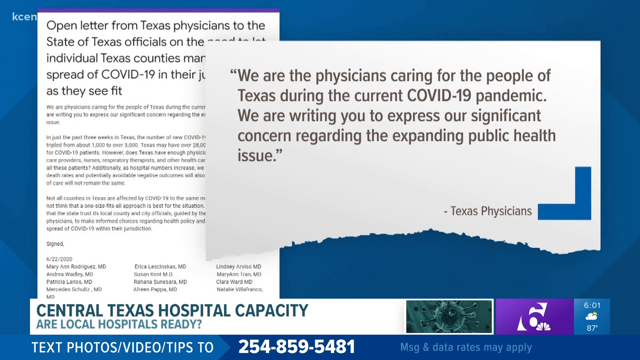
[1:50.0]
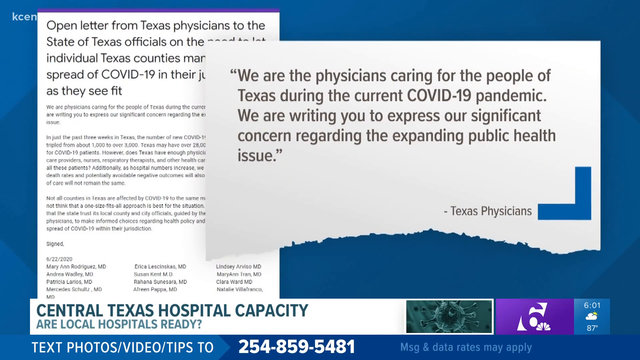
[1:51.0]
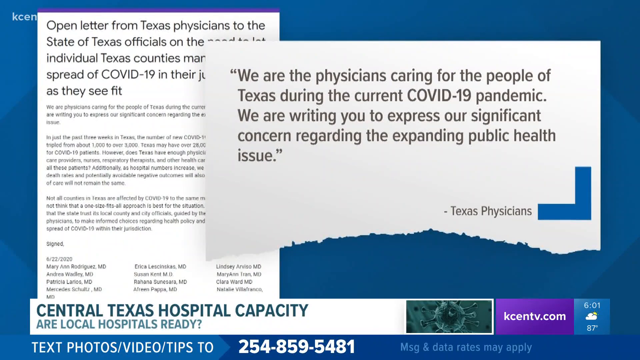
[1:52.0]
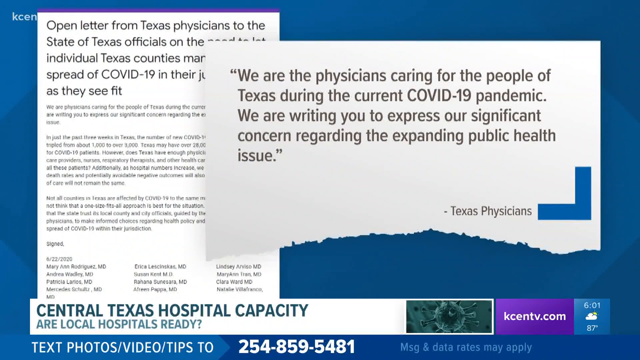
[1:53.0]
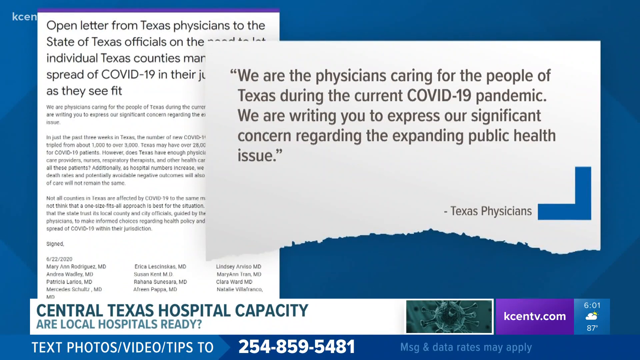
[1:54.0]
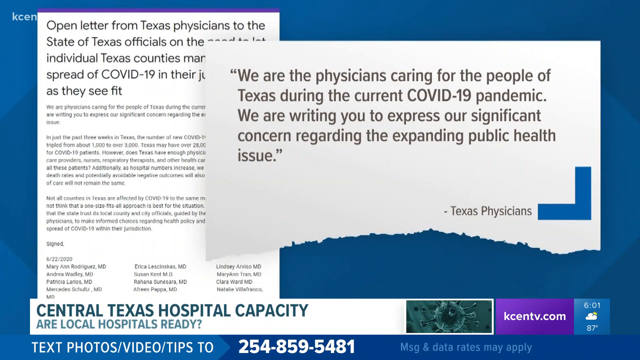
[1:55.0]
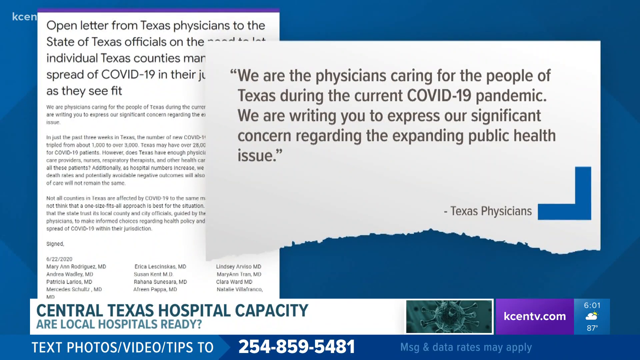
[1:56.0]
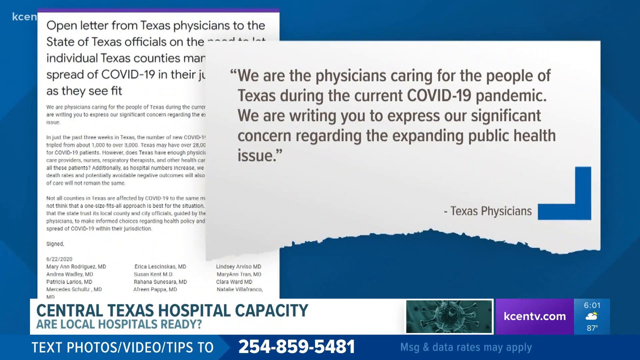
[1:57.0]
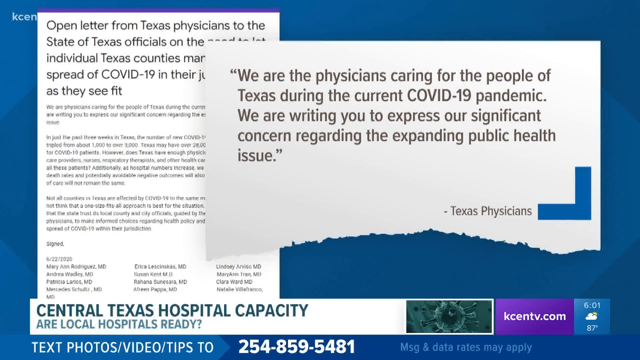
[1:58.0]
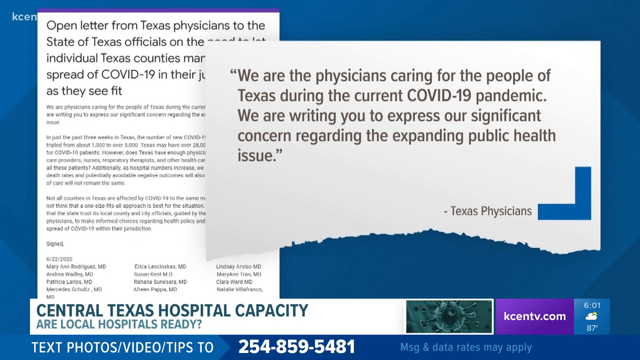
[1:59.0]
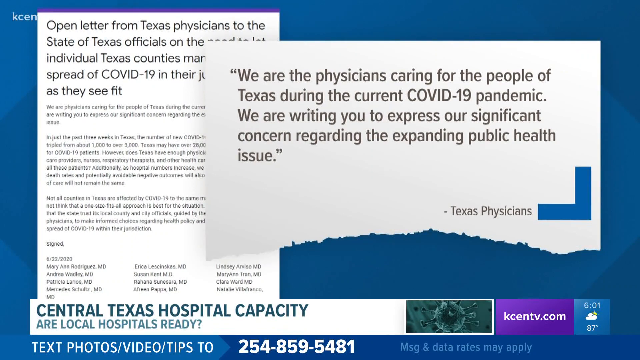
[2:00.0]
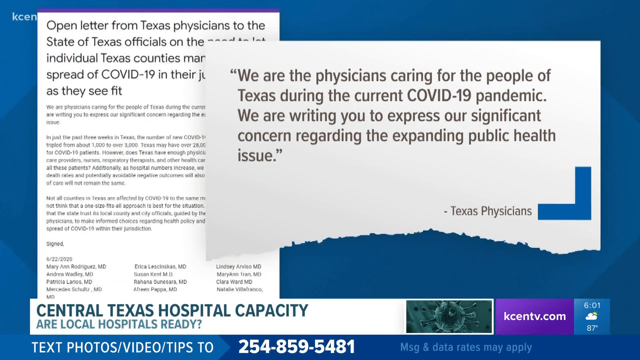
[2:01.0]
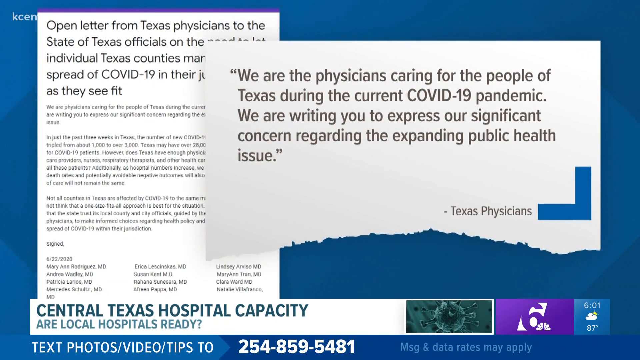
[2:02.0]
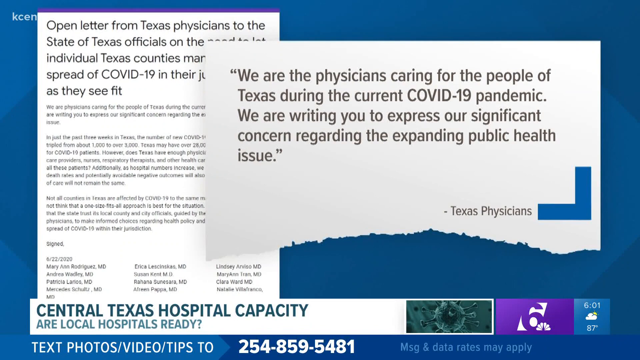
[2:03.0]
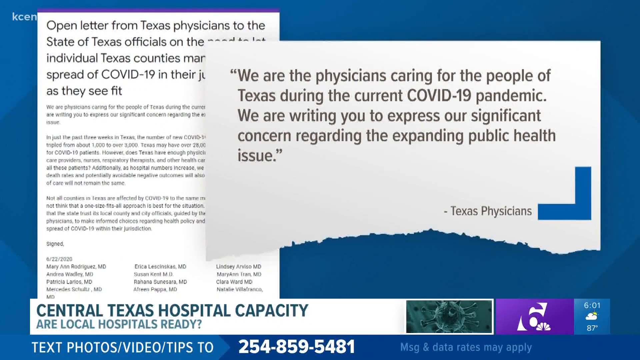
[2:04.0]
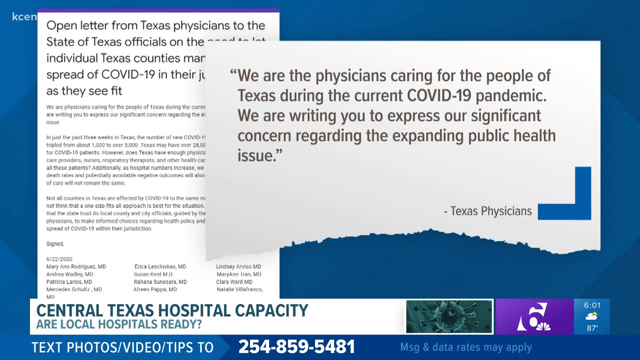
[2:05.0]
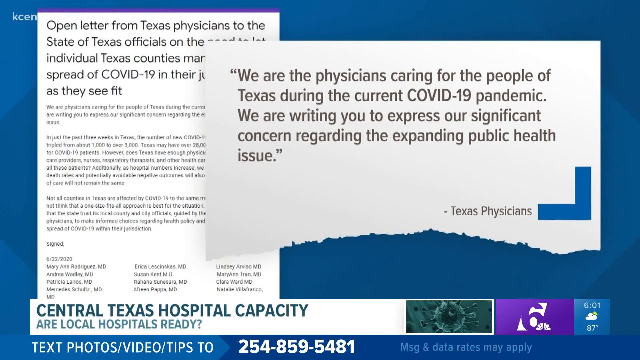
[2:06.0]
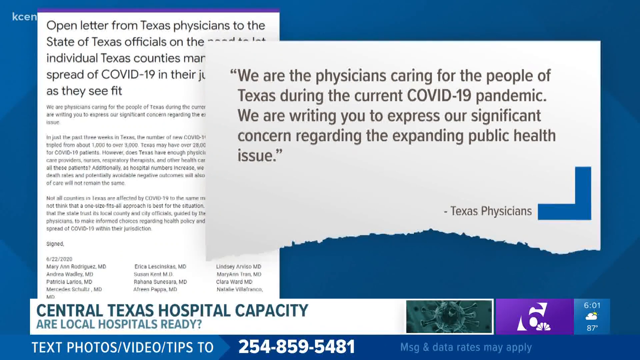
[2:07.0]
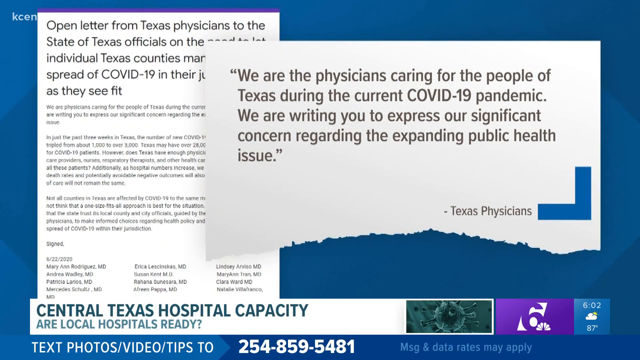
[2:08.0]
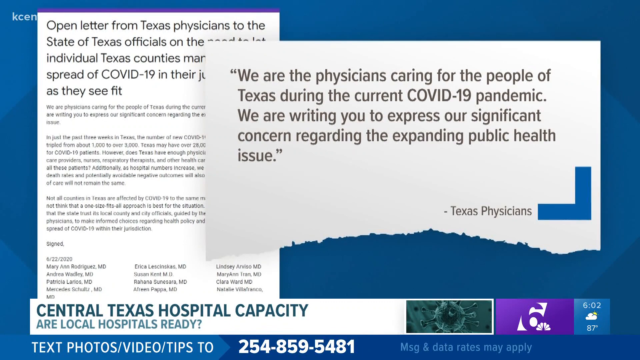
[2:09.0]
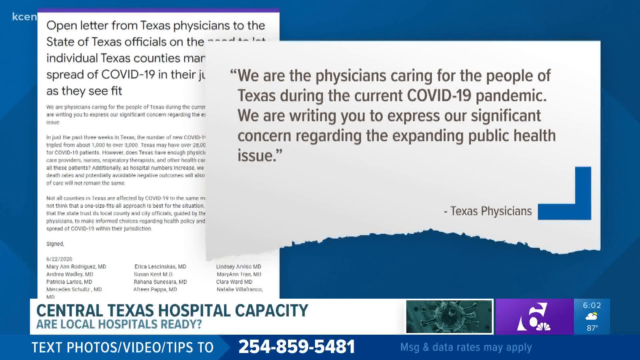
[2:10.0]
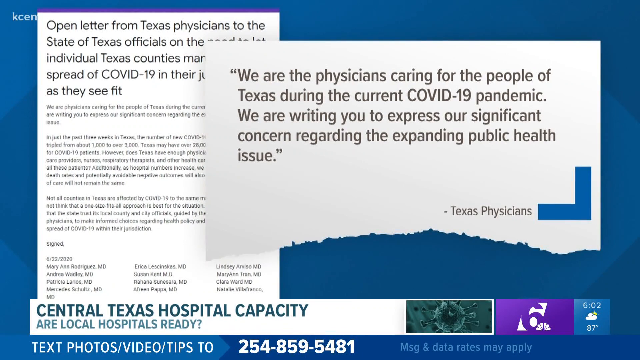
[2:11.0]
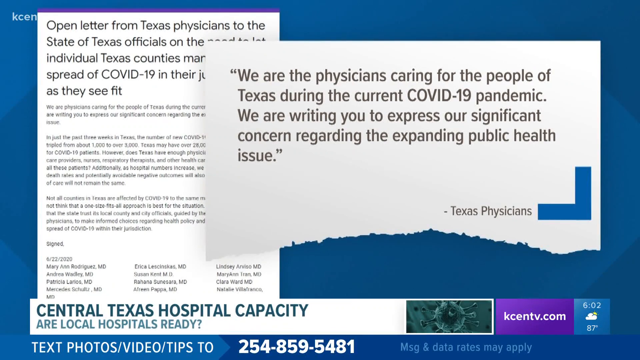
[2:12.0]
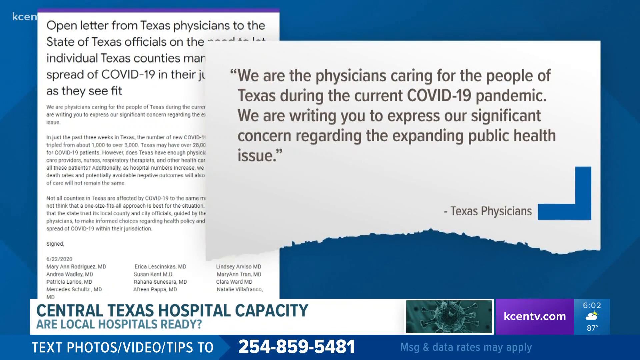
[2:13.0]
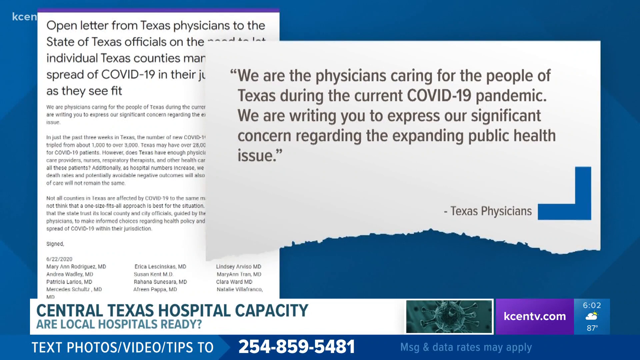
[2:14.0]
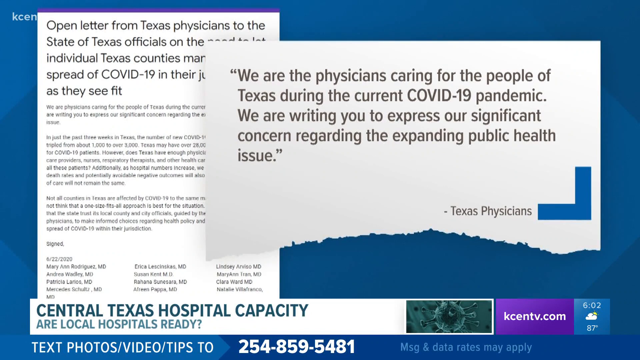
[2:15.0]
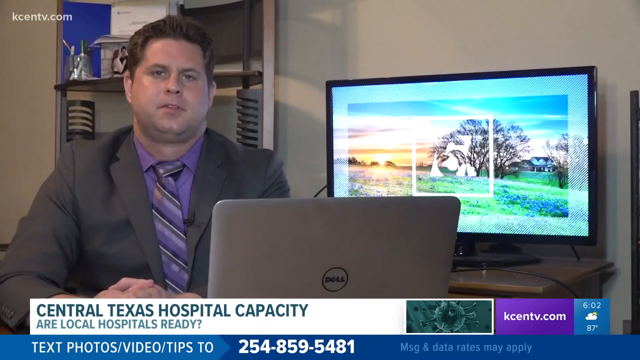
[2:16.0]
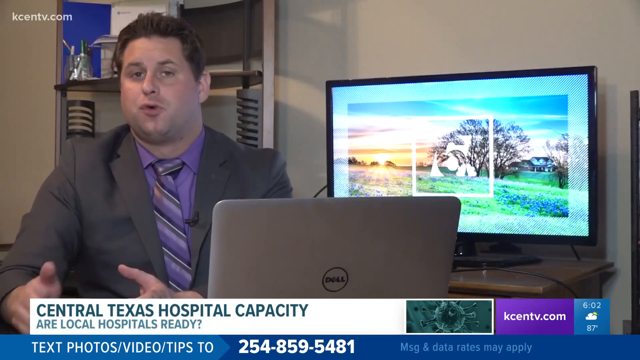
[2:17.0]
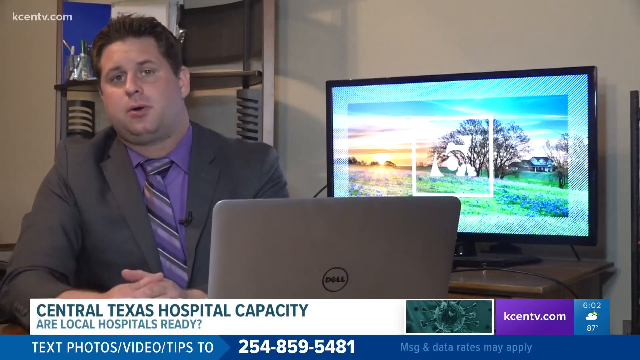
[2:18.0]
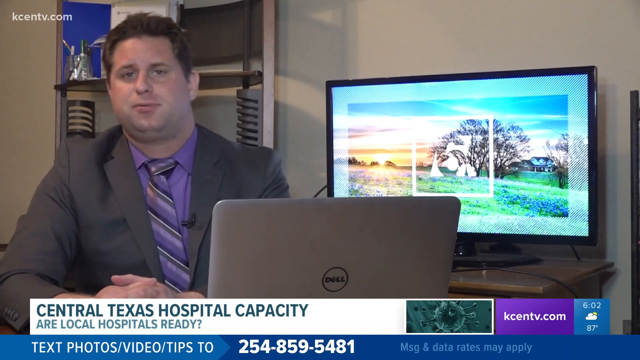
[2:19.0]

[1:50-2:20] An open letter from Texas physicians to state of Texas officials appears, and next to it a quote from the physicians: "we are the physicians care for the people of Texas during the current COVID-19 pandemic. We are writing you to express our significant concern". The quote is on a white background whose bottom edge looks ragged, giving the digital illusion of a torn piece of paper. The quote is on the right side of the screen and the open letter on the left, all on a blue background. Below the heading of the letter are a few paragraphs that look like a list of doctors; the print is too small to read, but quite a few MDs are visible at the bottom of that part of the page. This stays on screen for quite a while, then the video returns to the man in the gray suit sitting in the room with the TV.